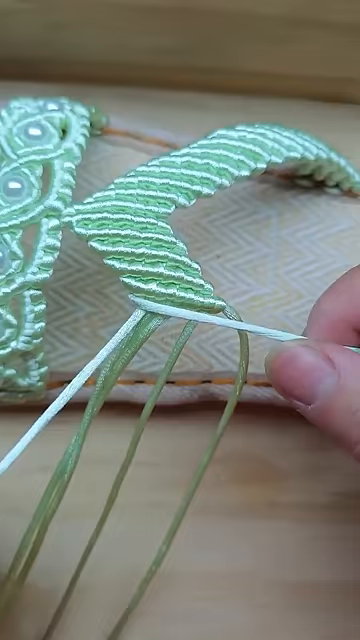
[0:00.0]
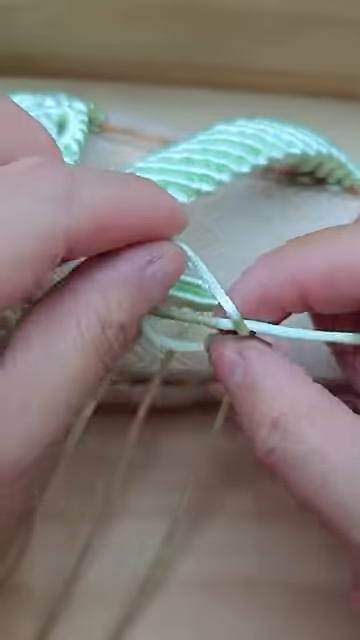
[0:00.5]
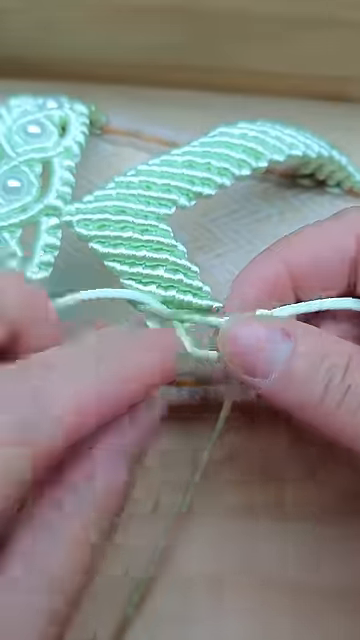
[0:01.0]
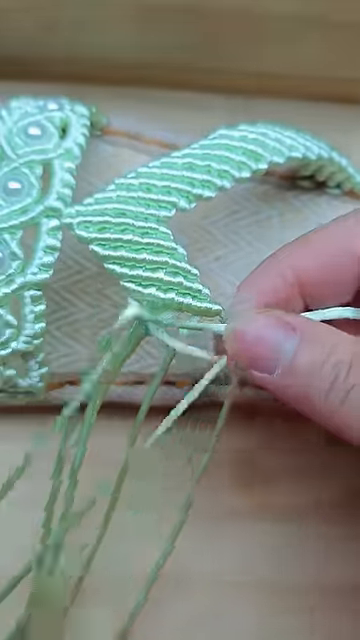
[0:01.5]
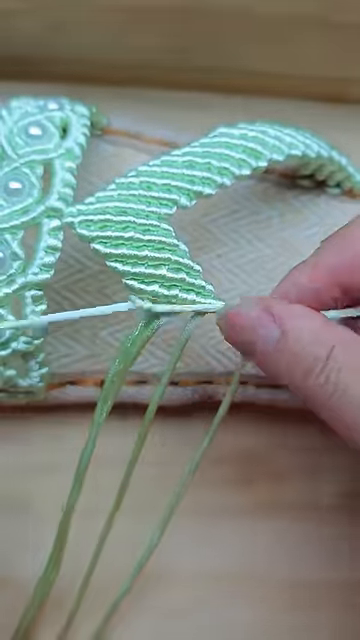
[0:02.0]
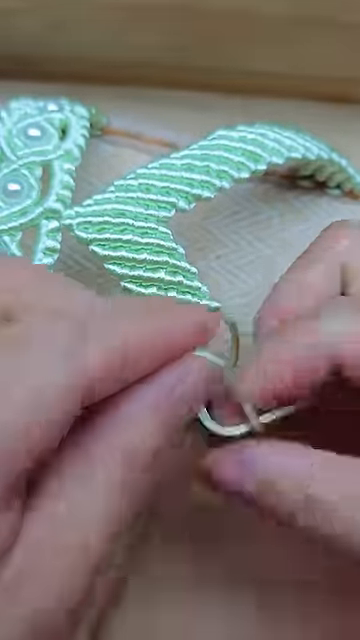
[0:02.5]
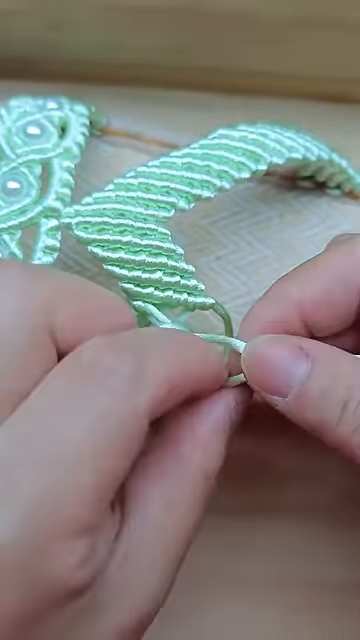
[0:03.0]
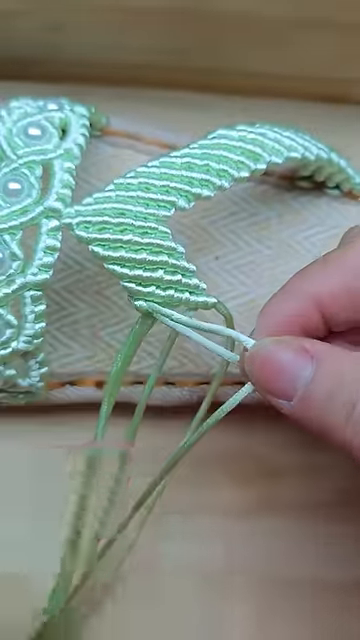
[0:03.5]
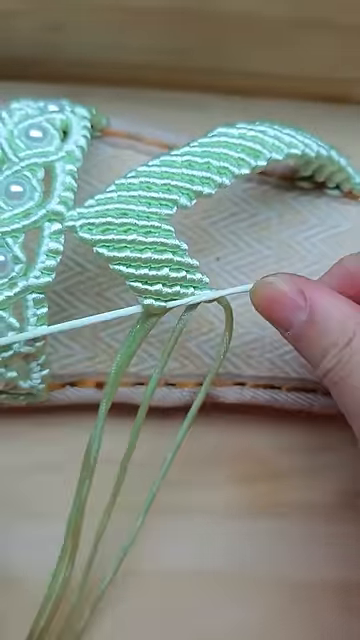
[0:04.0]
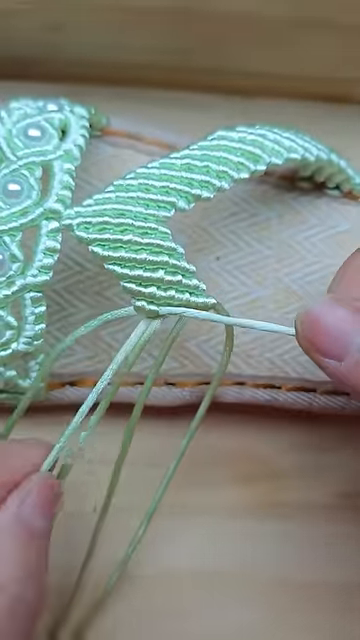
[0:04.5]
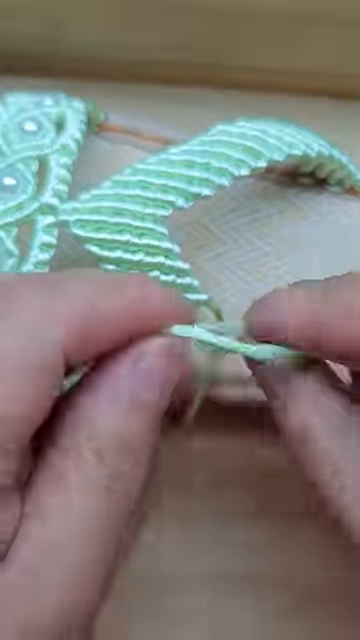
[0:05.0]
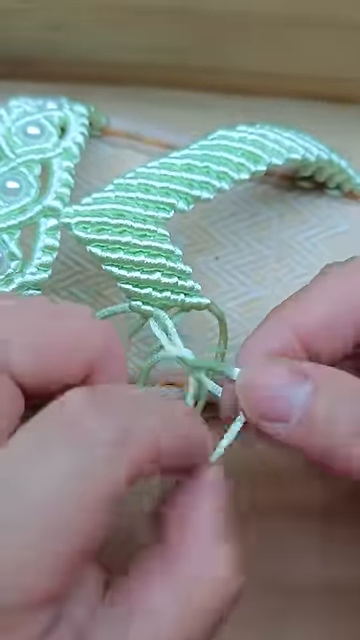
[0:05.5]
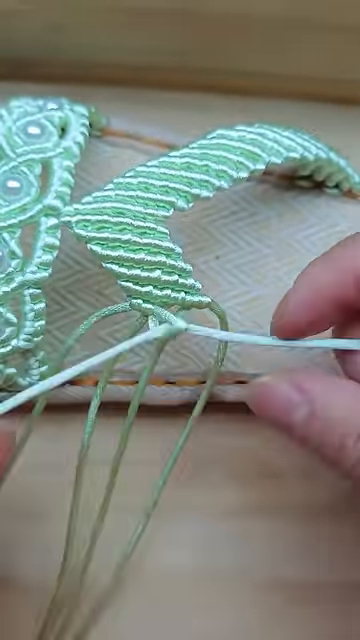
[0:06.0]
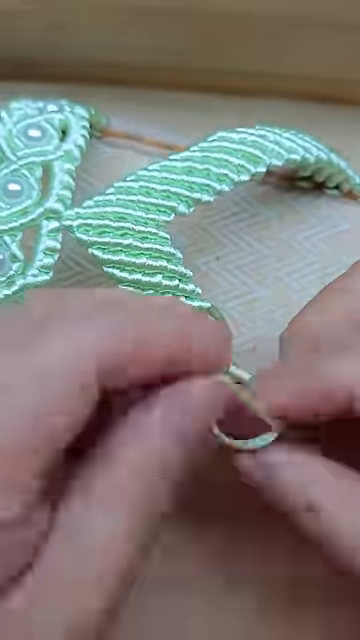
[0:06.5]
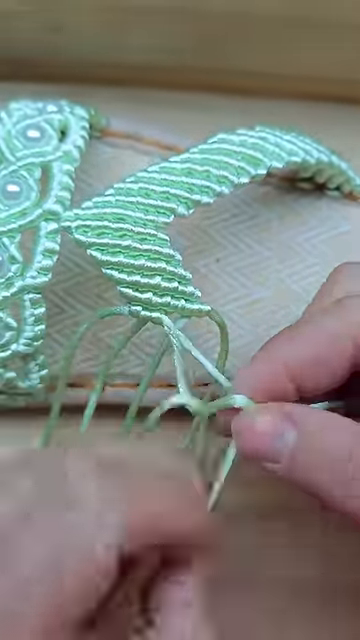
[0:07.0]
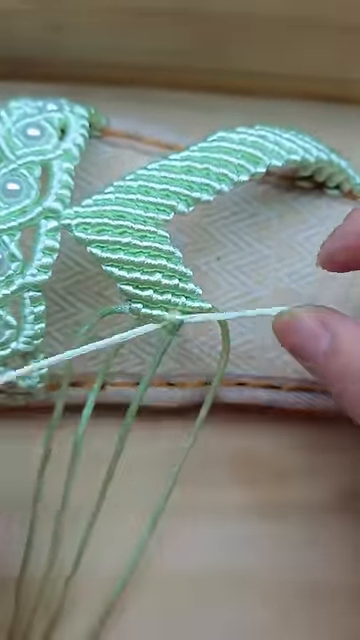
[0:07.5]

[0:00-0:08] A person sews something together using green thread. Only the person's hands are visible, and they can be made out to be Caucasian. The person looks very skilled at the work. One portion is already completed: the design on the left-hand side is complete and oriented vertically. The person is now working on the right side, which is kind of a triangular shape, with one side slanting up toward the upper right-hand side of the frame, and they sew down diagonally toward the bottom right side. The sewing is very quick; the video either looks sped up or the person is just very fast. The sewing is done on top of a beige tabletop.